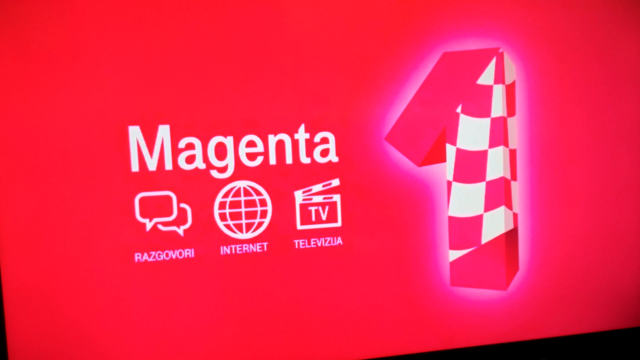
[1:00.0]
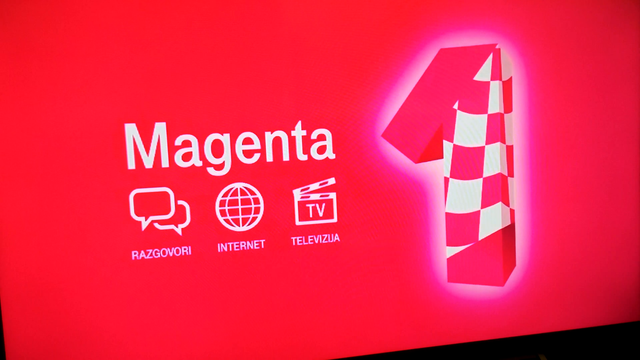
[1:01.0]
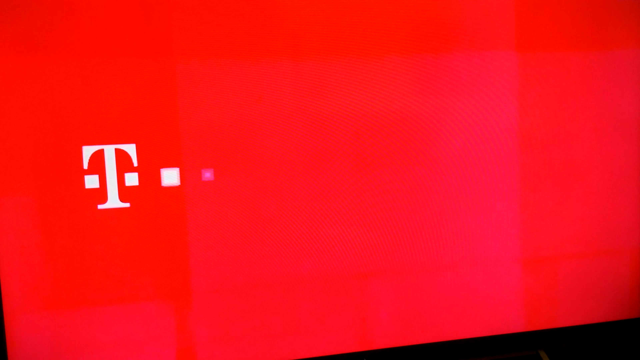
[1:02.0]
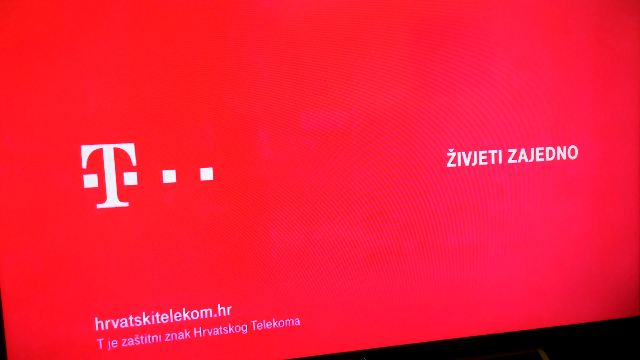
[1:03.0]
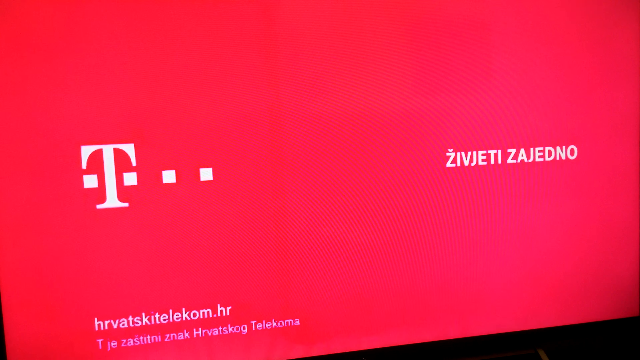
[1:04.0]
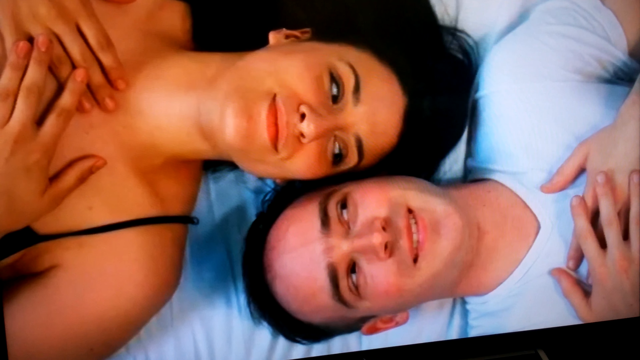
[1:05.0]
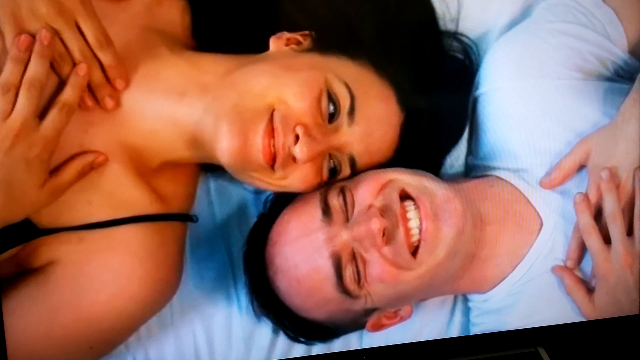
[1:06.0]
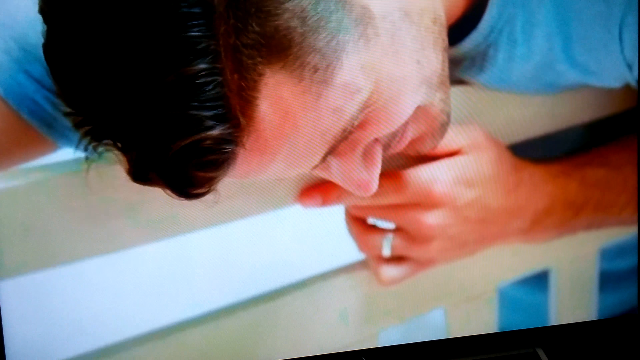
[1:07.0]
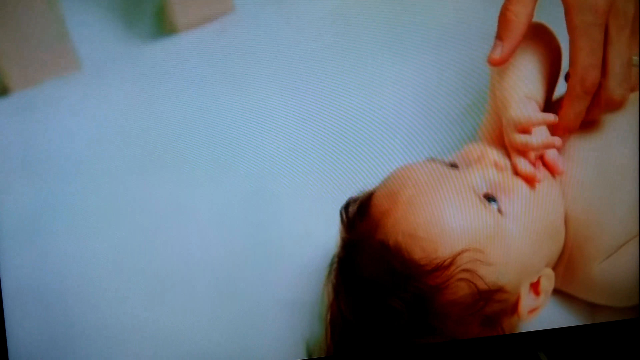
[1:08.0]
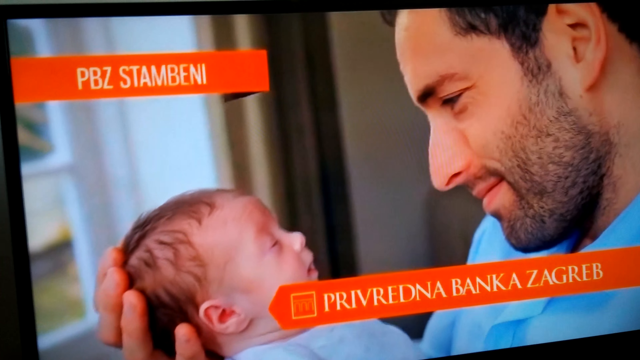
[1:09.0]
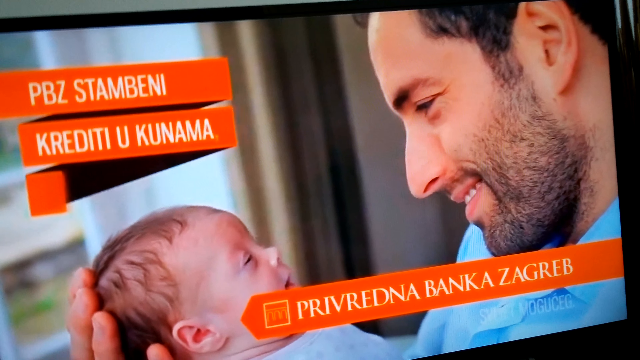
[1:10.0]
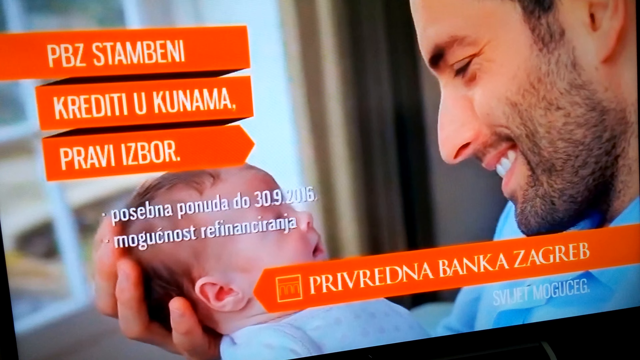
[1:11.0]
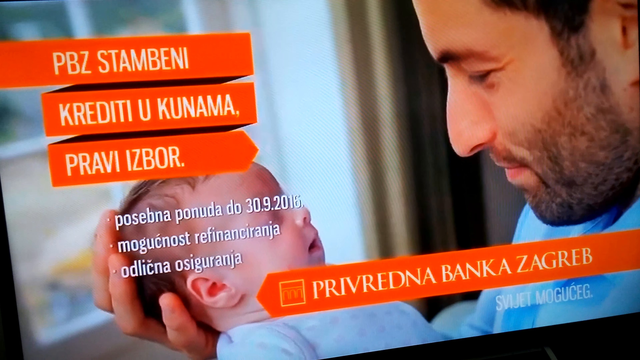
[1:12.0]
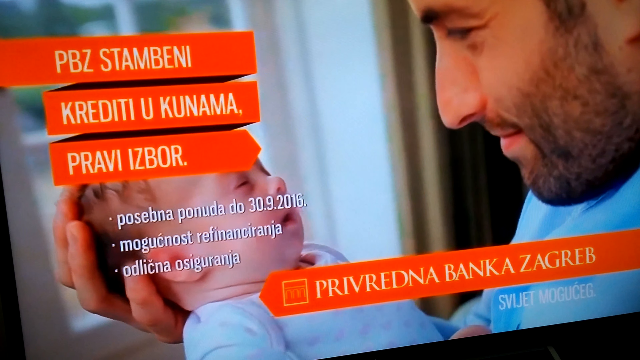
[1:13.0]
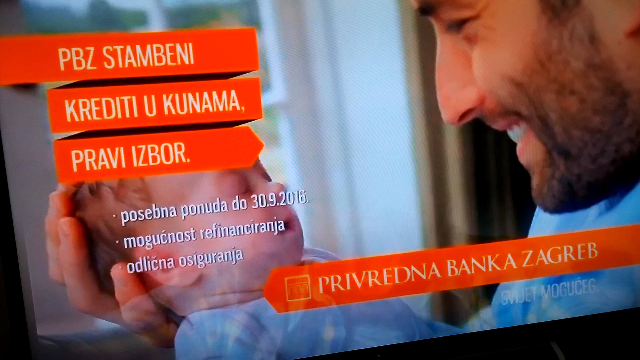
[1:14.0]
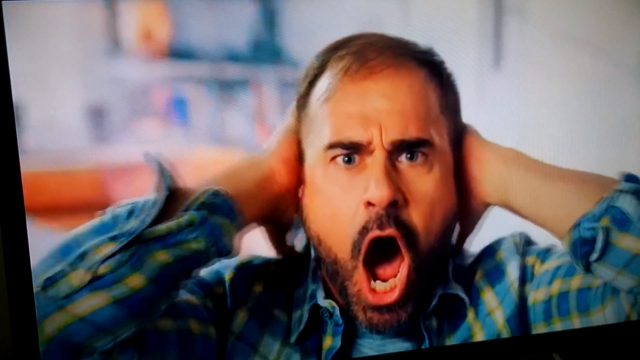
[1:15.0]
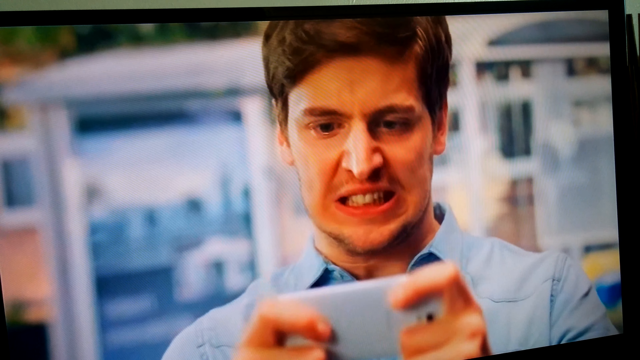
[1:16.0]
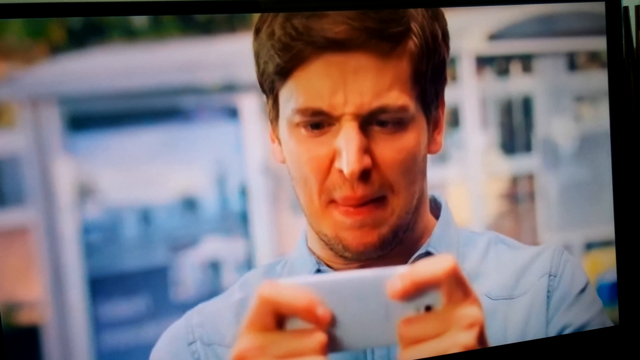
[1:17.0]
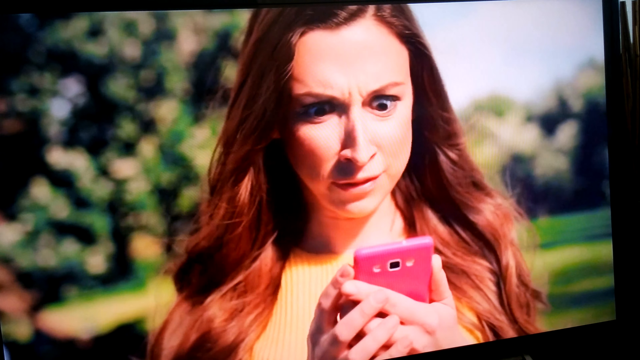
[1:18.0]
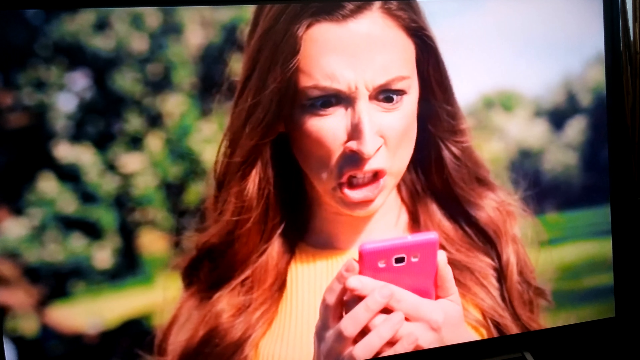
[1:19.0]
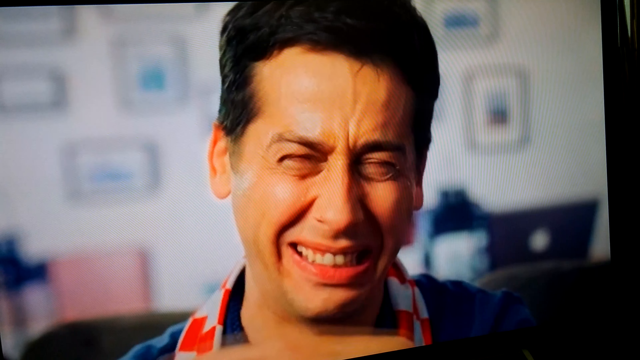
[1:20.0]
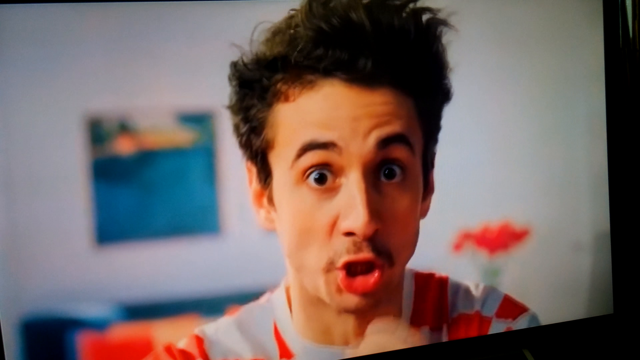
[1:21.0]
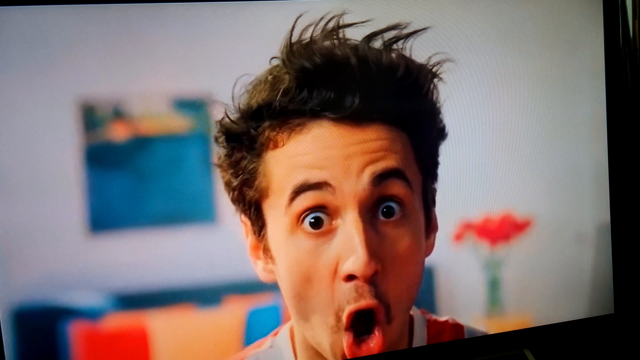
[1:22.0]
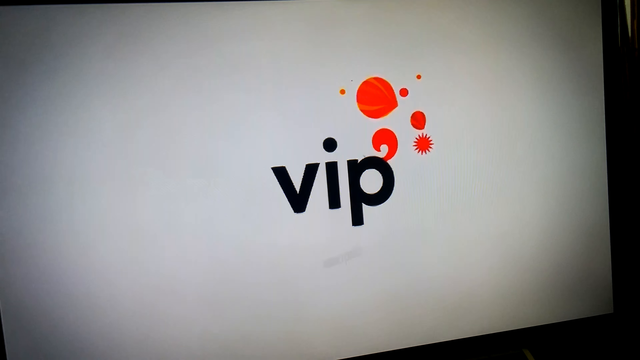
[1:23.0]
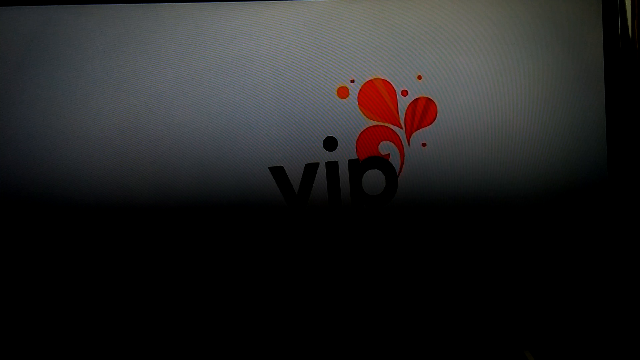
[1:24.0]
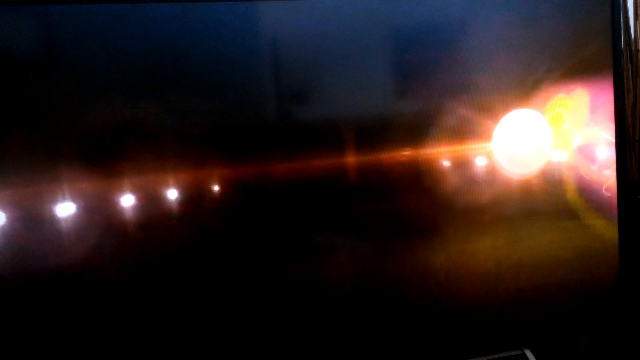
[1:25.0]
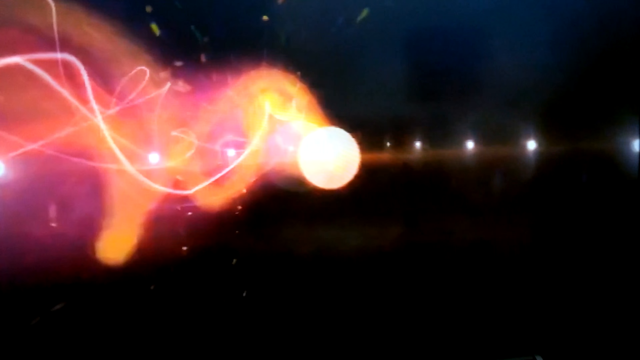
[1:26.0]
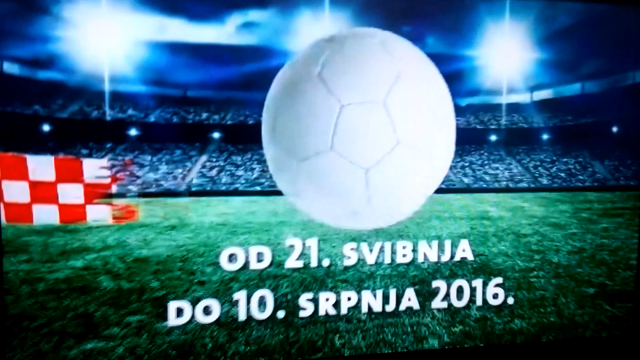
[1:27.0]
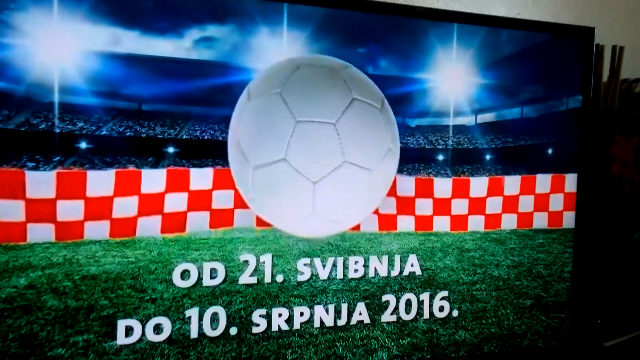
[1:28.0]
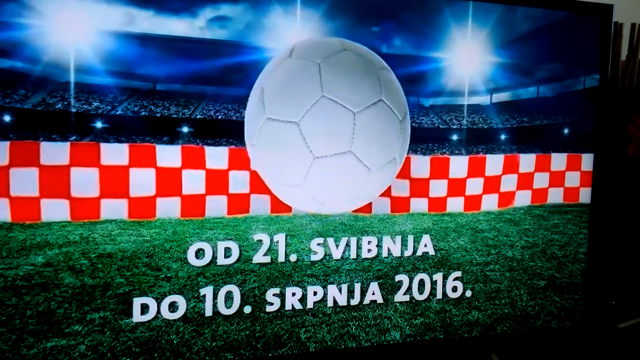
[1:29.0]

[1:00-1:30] What looks like a T-Mobile ad begins, with a magenta screen in the back and a T logo on the left side. A man and a woman are laying down on a bed with their faces next to each other but opposite each other: one is upside down and the other right side up. Their heads are touching and they are smiling. The commercial shifts to a man who seems to be looking down at a baby inside a crib; the baby looks back at him, and the man smiles and looks very happy. The scene shifts to some angry-looking men looking at their phones, and a woman looking at her phone too; they are all upset, and some of them are crying. The screen then reads "VIP", and some kind of ball flies through the screen. A soccer field is shown again, with a ball with a checkered flag on the screen, apparently a soccer ball though it looks more like a volleyball.